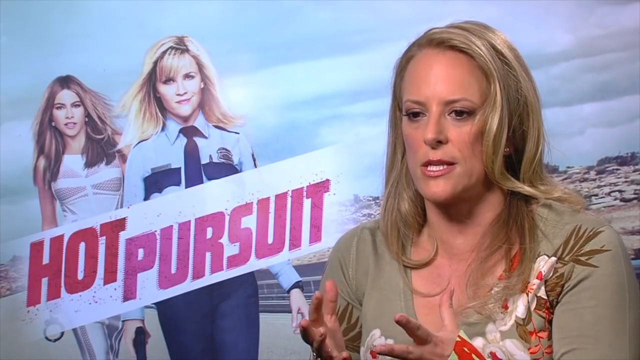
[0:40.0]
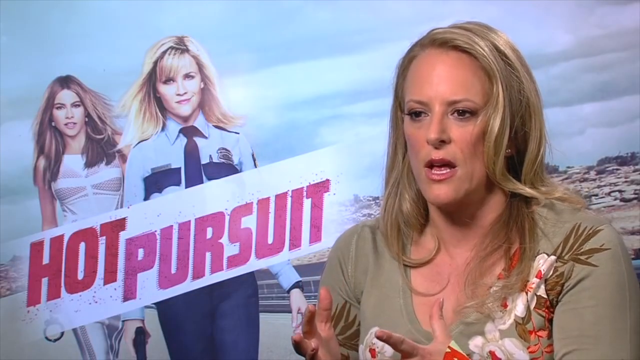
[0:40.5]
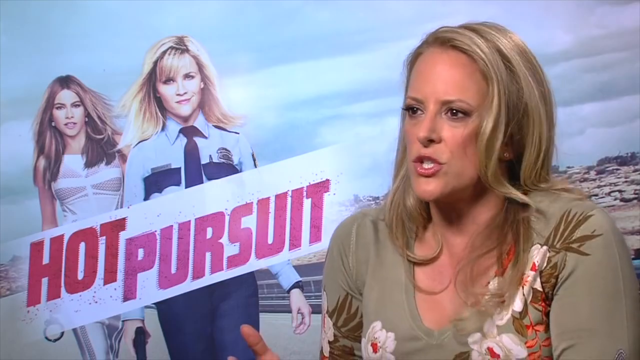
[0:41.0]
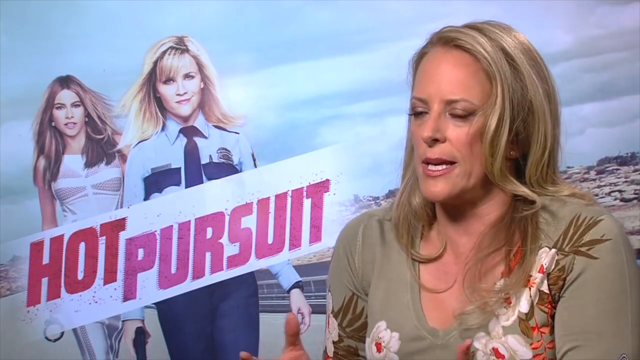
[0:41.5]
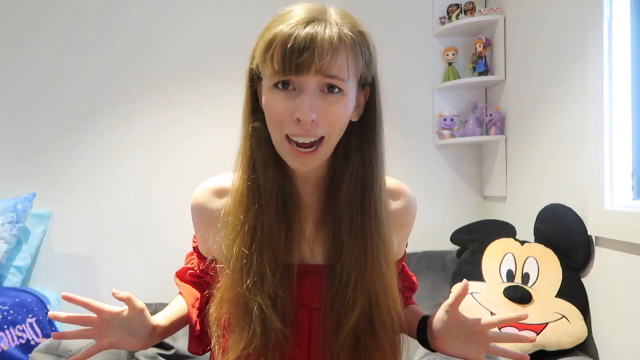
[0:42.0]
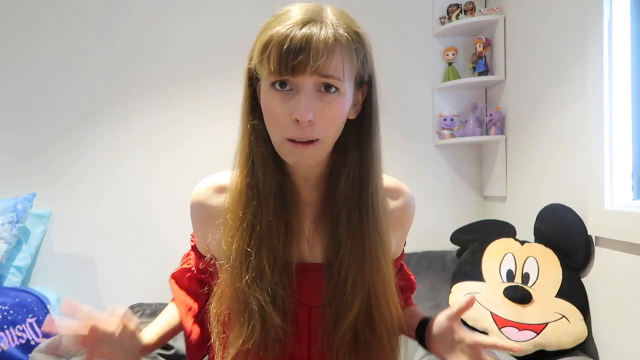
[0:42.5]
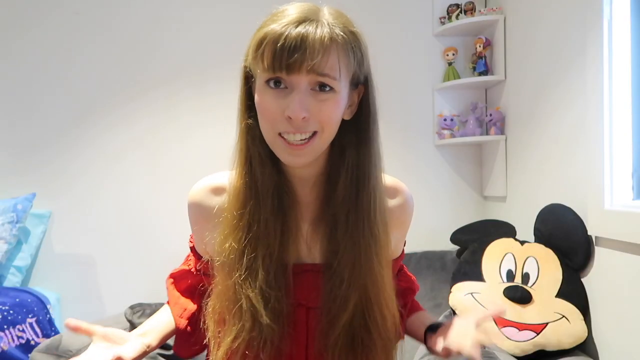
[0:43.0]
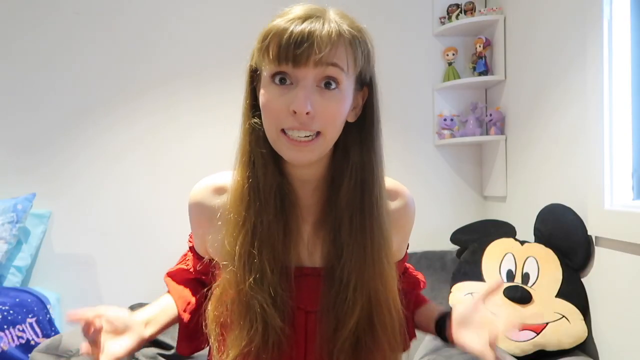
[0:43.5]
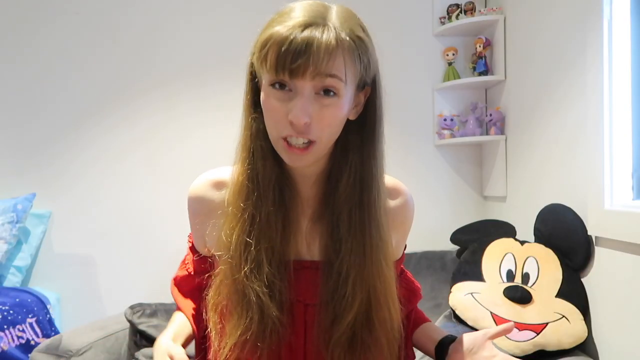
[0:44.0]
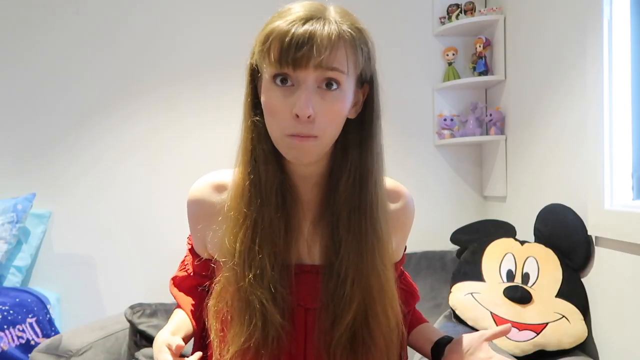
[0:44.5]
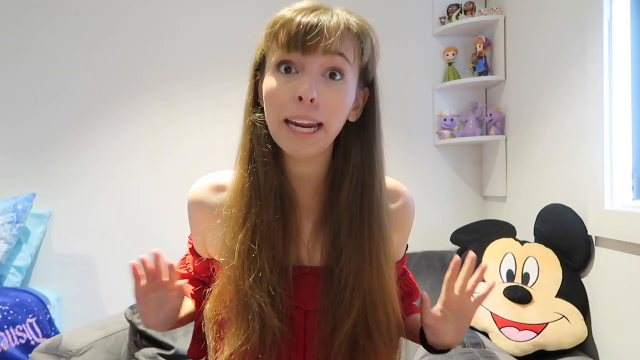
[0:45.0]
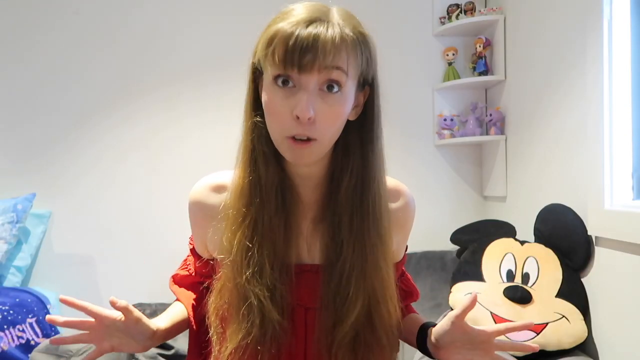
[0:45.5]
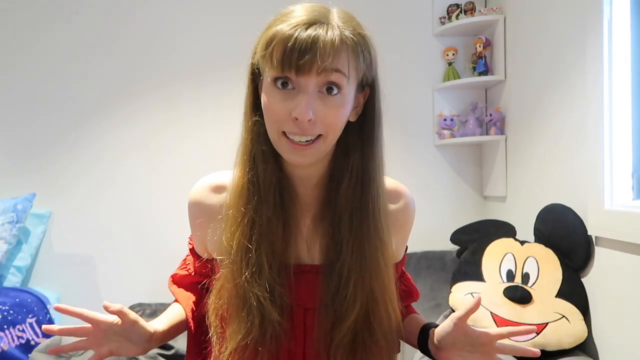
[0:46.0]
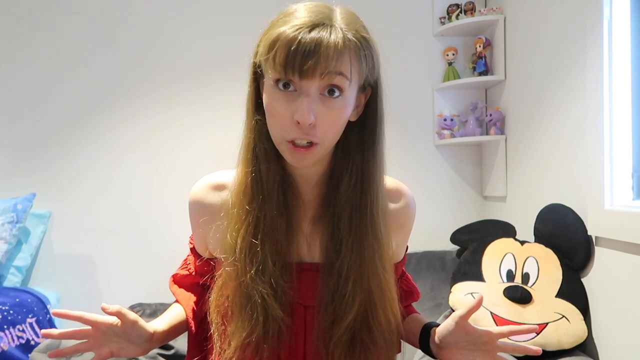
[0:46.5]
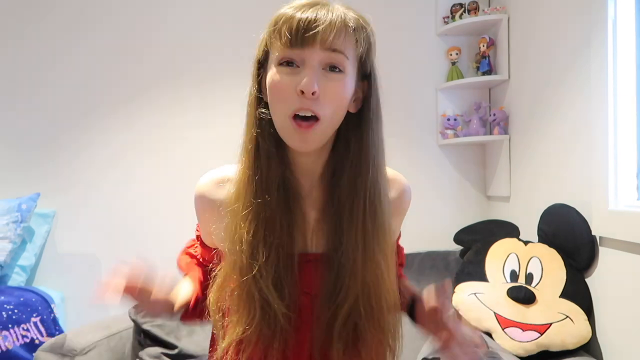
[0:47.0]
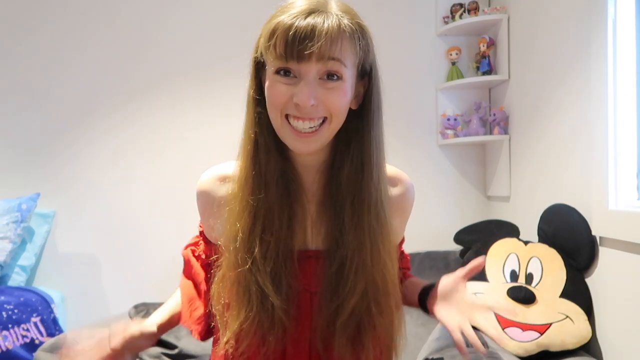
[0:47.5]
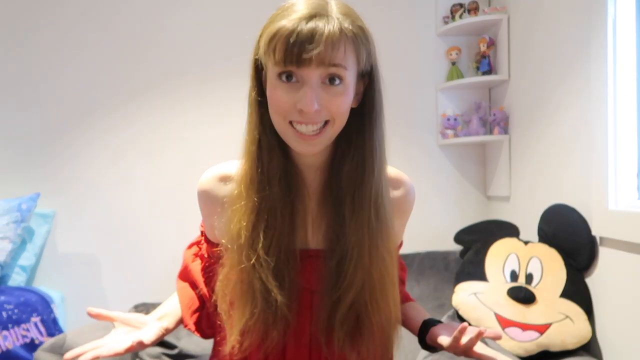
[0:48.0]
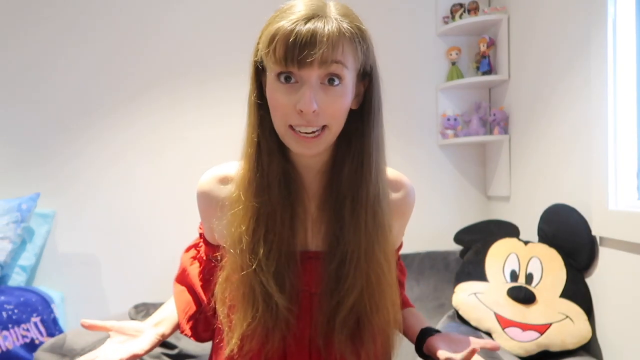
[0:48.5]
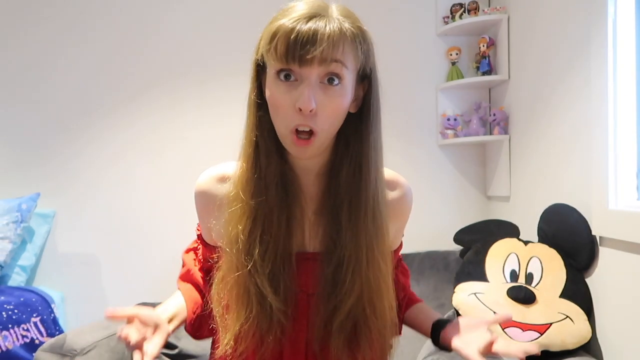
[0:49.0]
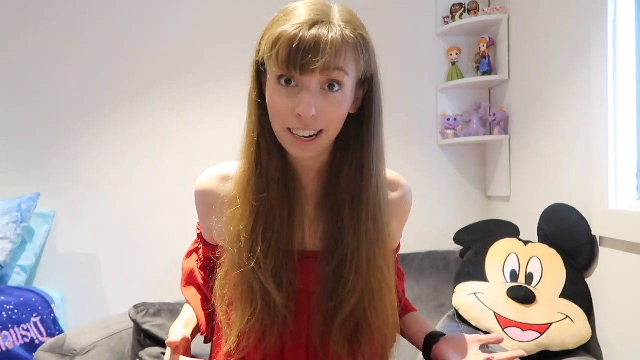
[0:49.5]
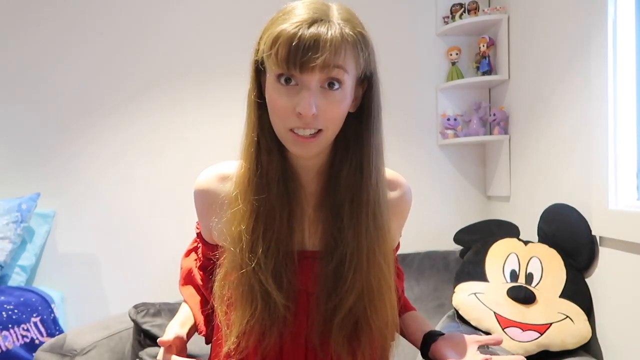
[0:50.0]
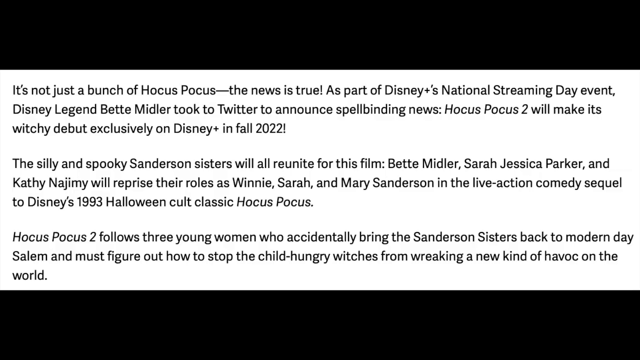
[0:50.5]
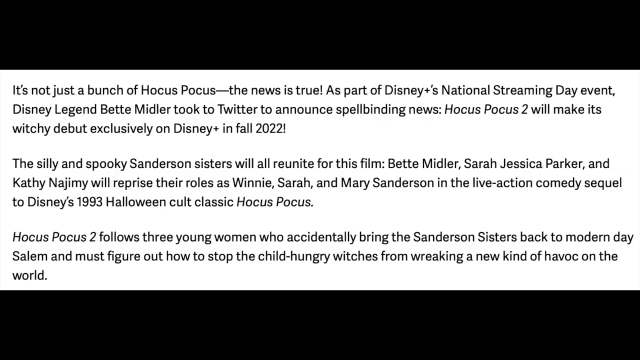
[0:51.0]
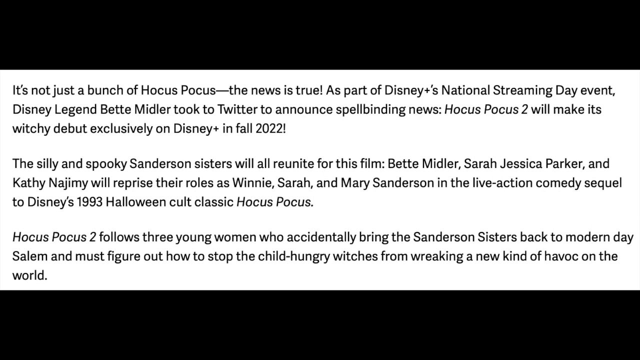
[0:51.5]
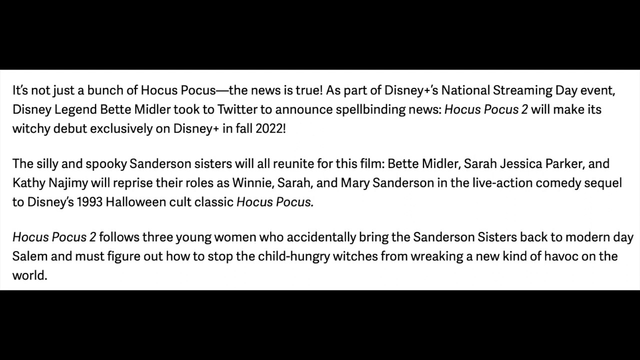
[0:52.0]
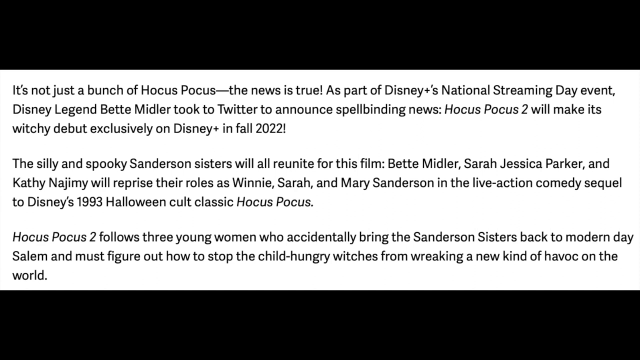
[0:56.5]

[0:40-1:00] The video goes back to the host, who is in a room that is not a studio. Text on the screen can be read, including "the news is true as part of Disney Plus's National Streaming Day event," "Legend Bette Midler took to Twitter to announce Spellbinding News Hocus Pocus 2 will make its" and "debut exclusively on Disney Plus in Fall 2022." It mentions Bette Midler and Sarah Jessica Parker reprising their roles as the Sanderson sisters, Winnie, Sarah and Madison, and Disney's 1993 Halloween cult classic Hocus Pocus. It also reads "Hocus Pocus 2 follows three young women who accidentally bring the Sanderson sisters back to" the modern day.